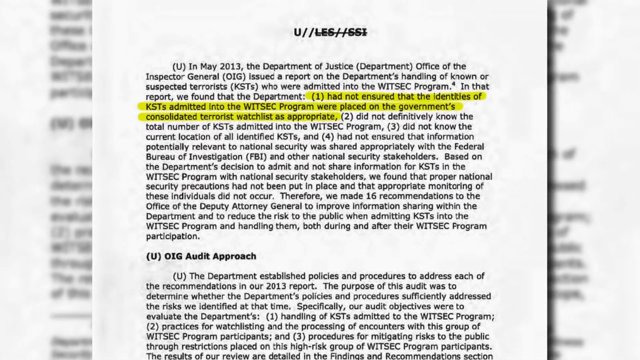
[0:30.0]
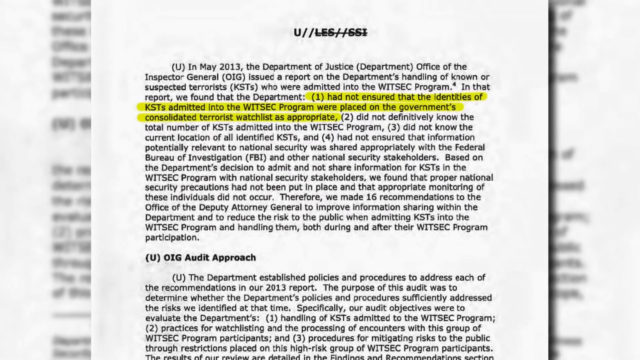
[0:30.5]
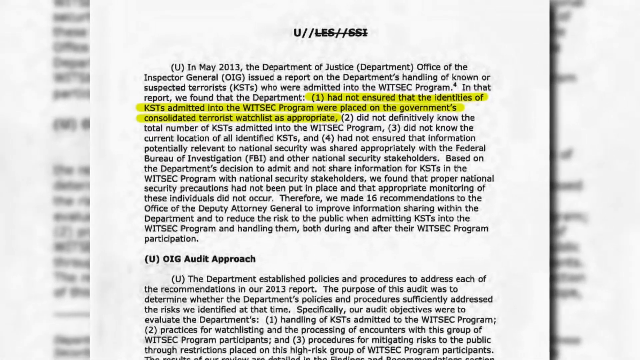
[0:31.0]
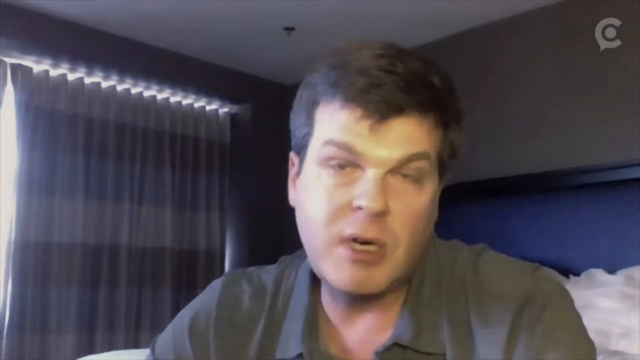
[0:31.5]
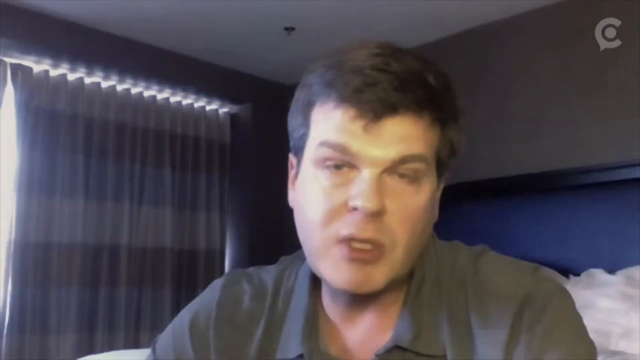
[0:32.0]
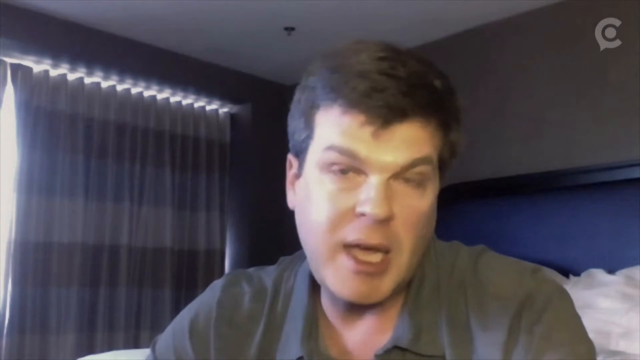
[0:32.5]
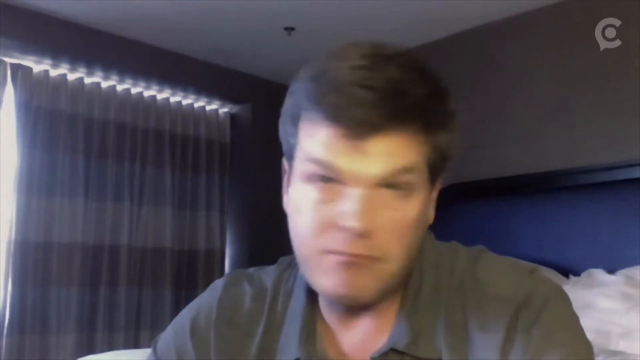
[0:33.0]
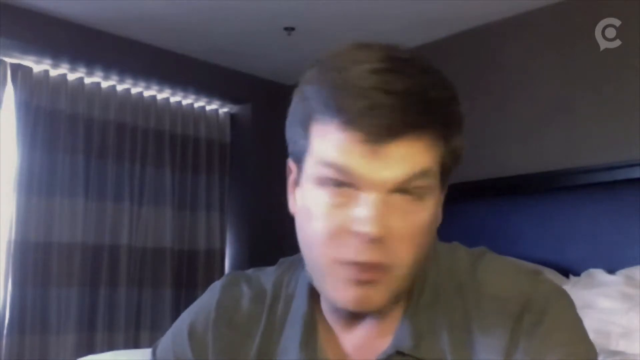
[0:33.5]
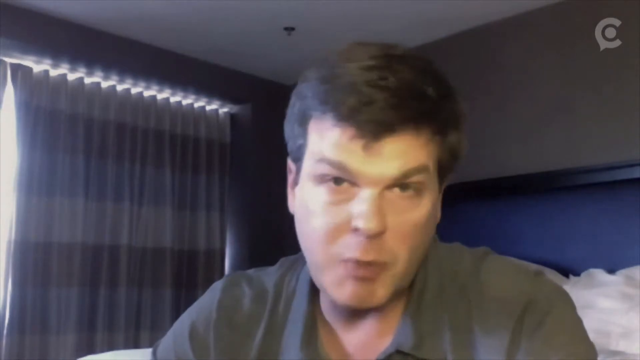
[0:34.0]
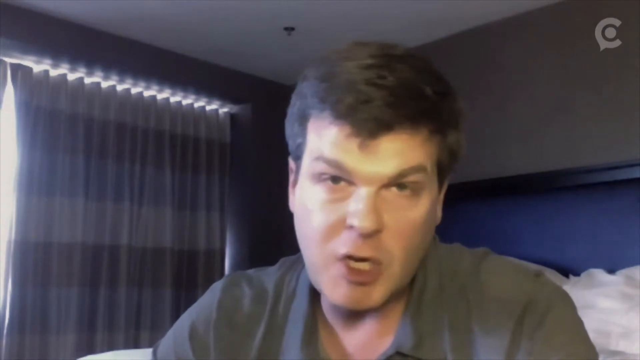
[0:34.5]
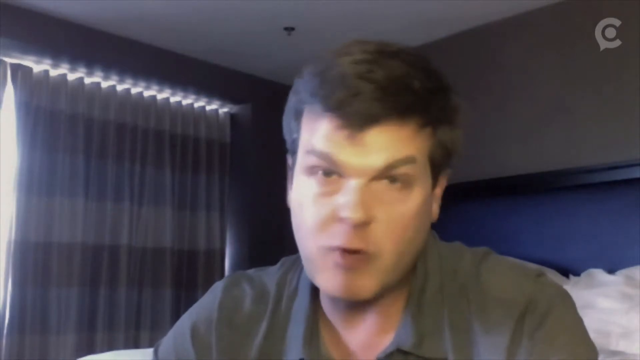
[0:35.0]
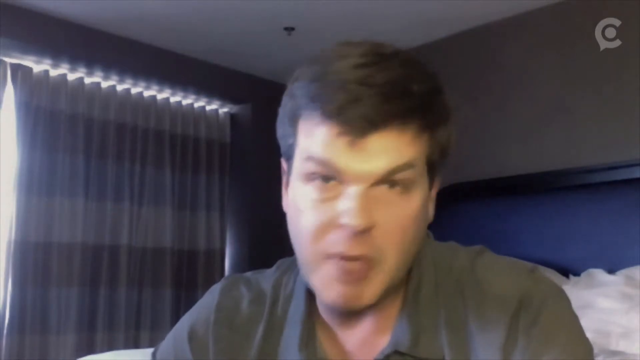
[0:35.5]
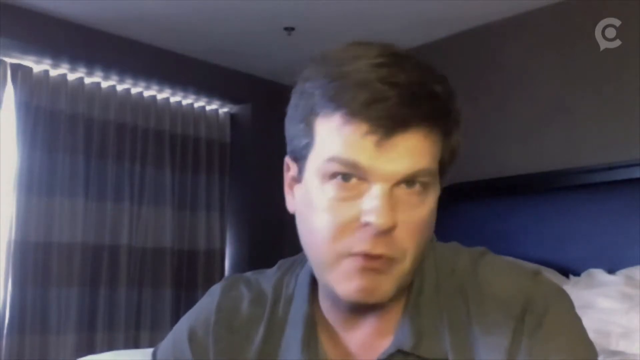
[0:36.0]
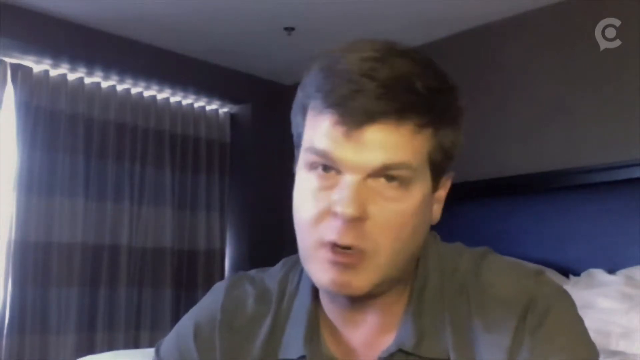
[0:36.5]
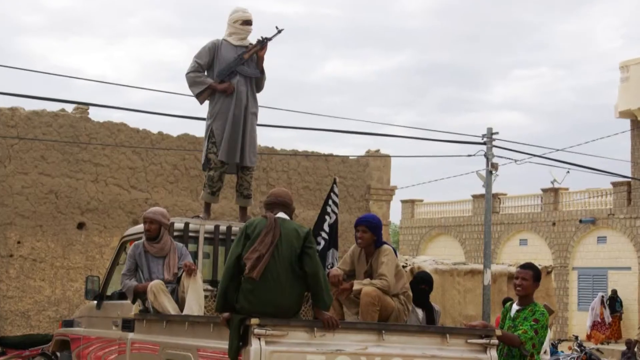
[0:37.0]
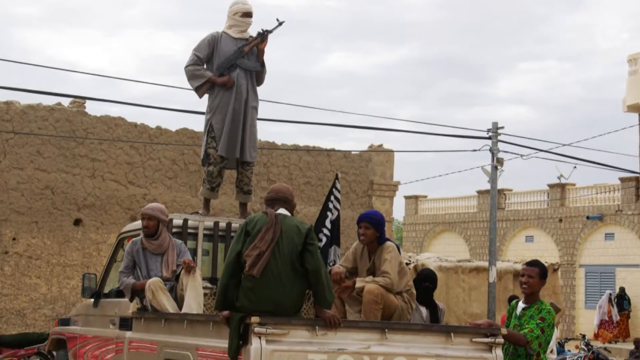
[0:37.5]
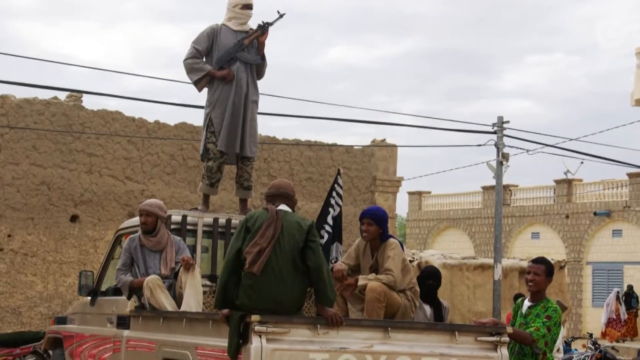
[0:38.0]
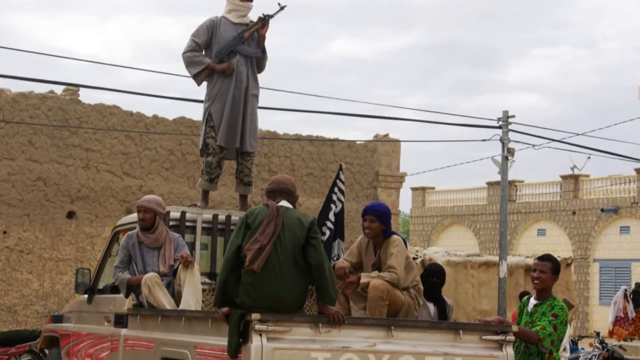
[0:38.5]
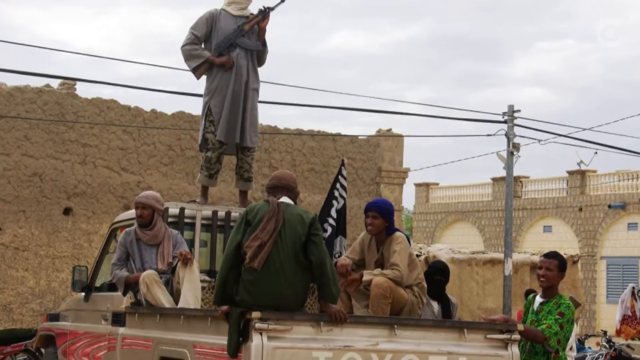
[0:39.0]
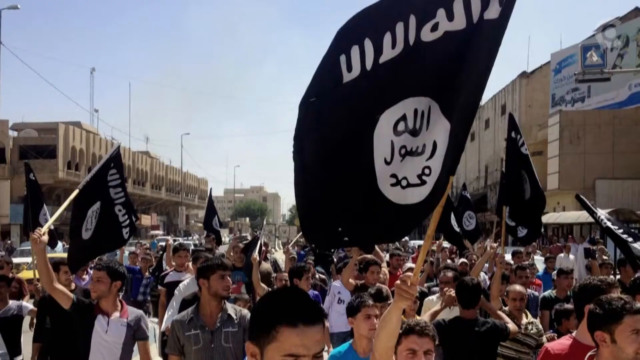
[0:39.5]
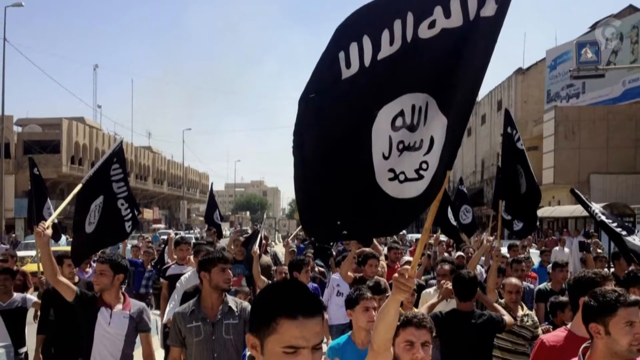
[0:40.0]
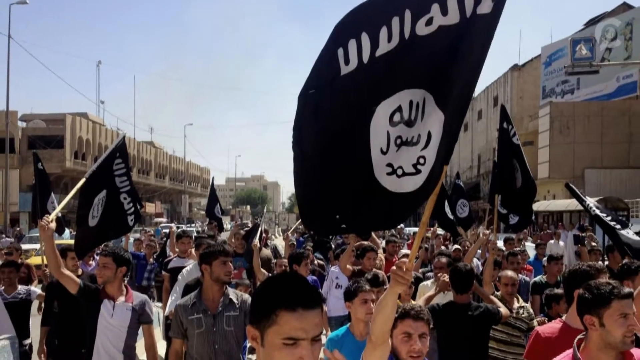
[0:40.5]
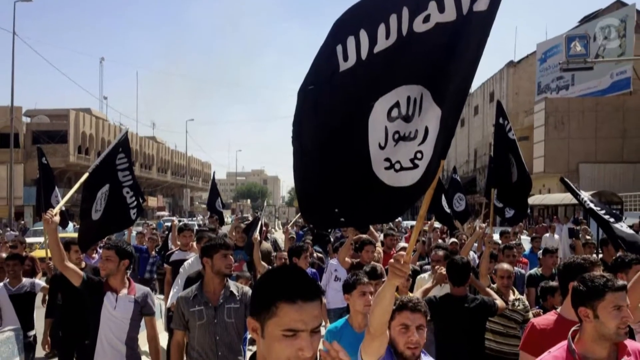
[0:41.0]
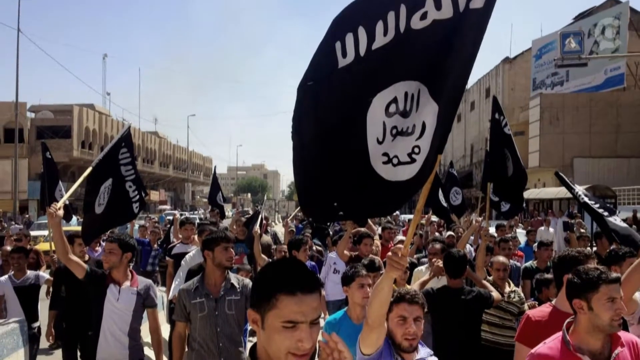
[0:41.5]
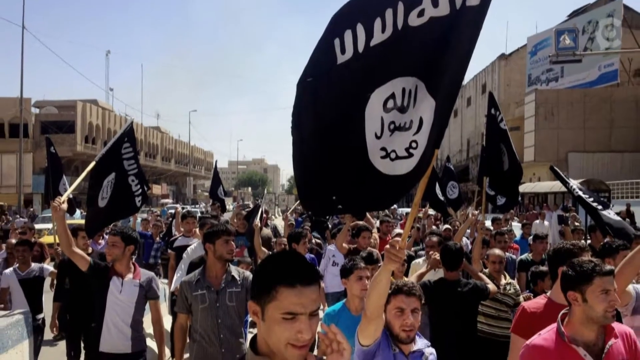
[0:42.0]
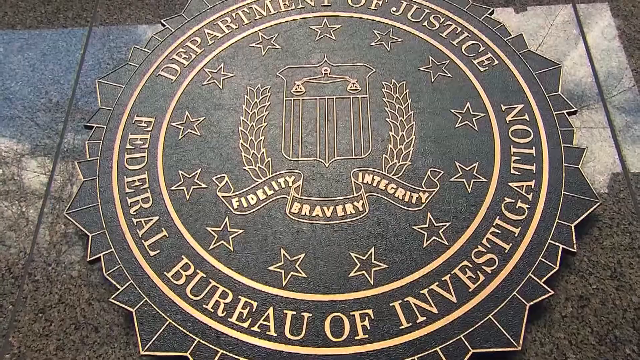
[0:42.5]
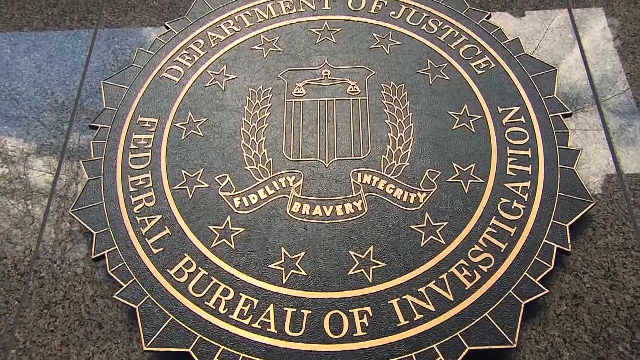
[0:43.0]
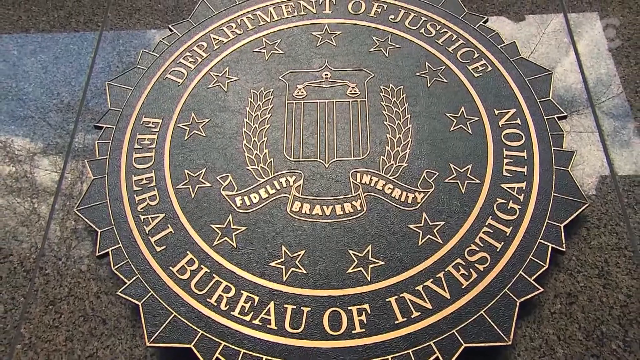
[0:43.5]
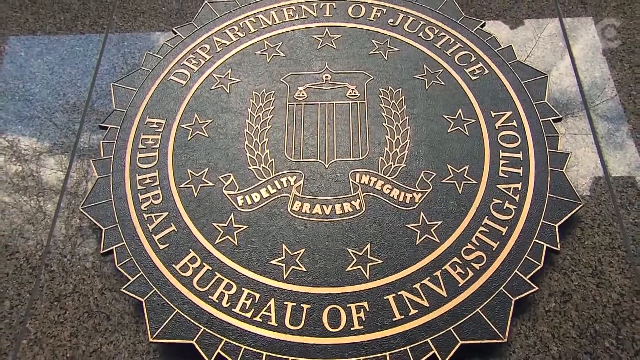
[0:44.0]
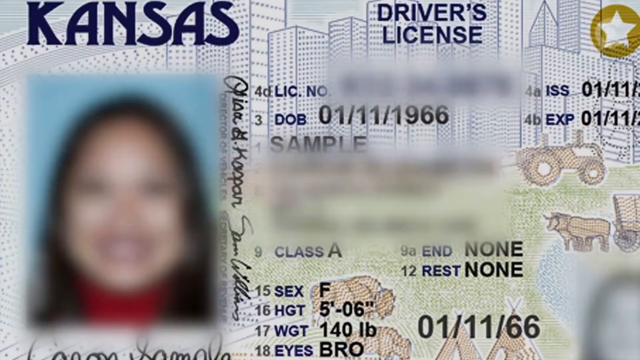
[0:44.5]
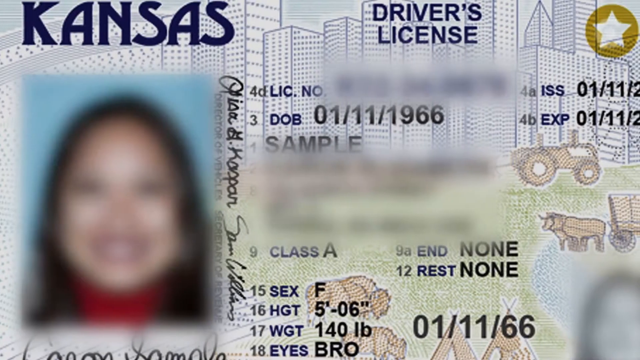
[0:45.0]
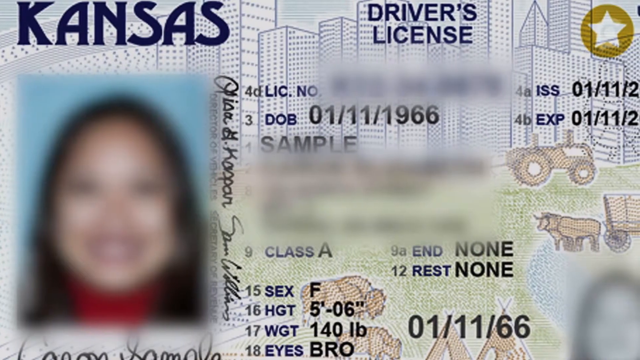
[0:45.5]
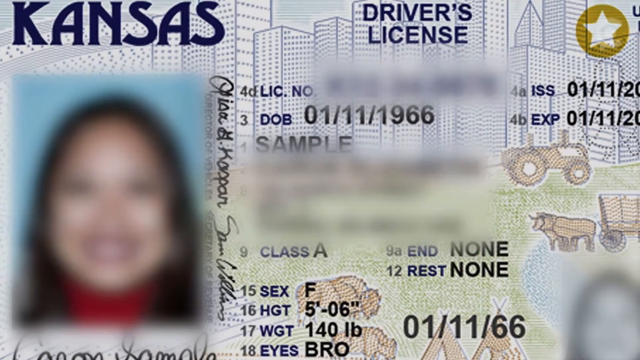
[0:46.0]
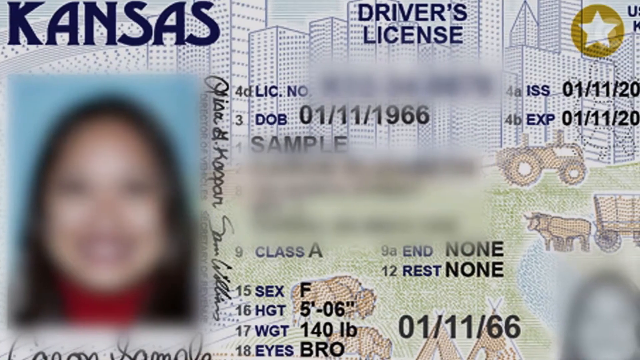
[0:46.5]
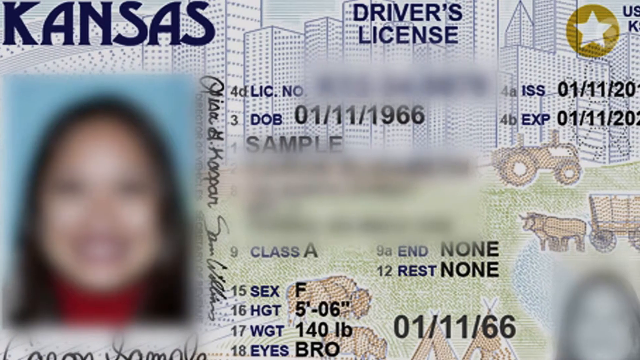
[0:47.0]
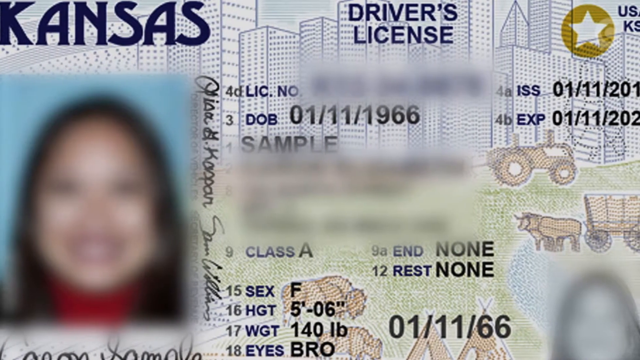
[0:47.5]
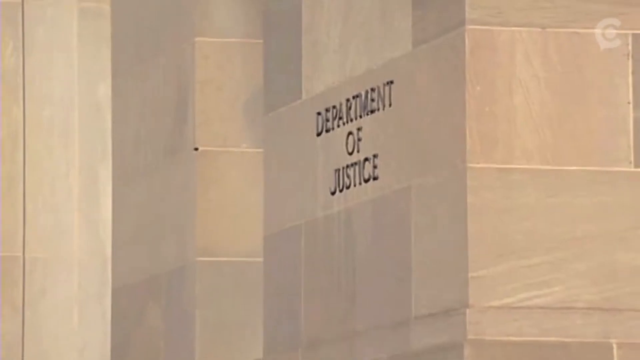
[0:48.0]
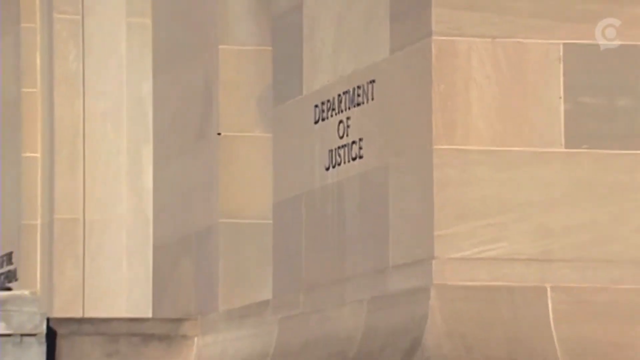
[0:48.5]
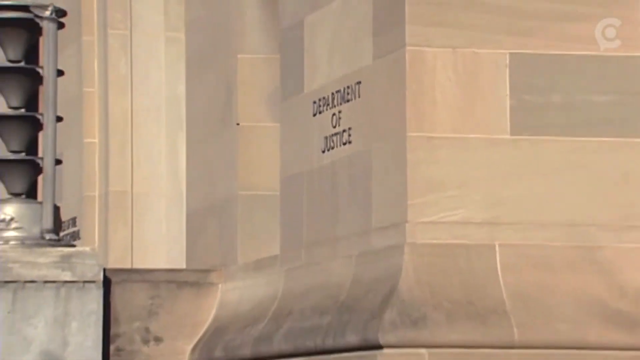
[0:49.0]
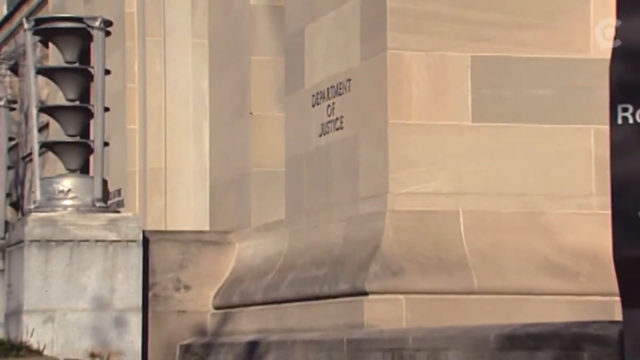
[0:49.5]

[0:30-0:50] A white page of paper with text on it fills the view, with about three lines of sentences highlighted in yellow. A man then speaks in a darkened room. Drapes on the left side have a horizontal design in white, gray and blue, the headboard behind the man to the right looks deep blue, the wall seems gray and the ceiling is white; the room is dimly lit, so the colors are hard to tell. The man has short brown hair and wears a gray T-shirt. He looks directly at the camera as he speaks, shaking his head from side to side and blinking. Next comes a still image of about six people who appear to be dressed in Islamic-like outfits with turbans draped around their heads. One of them stands on top of the head of the truck holding a rifle with the barrel pointed up; he wears a white turban mask draped around his head. A flag that looks black with Arabic inscriptions is on the truck, and the other men sit on the bed of the truck. The camera pans in closer. Next, a flag that looks like the ISIS flag appears in a still image of many people on the streets who seem to be demonstrating, waving the black and white flag. The FBI shield on the ground is shown, followed by an image of a State of Kansas driver's license with a woman's face blurred out and much of the information blurred out.